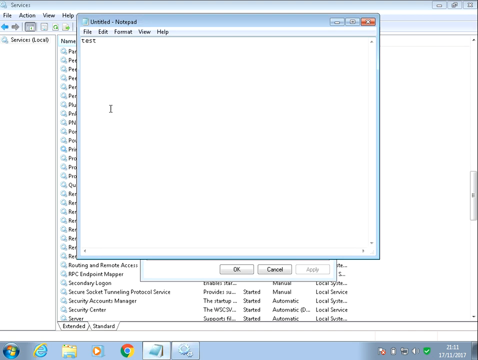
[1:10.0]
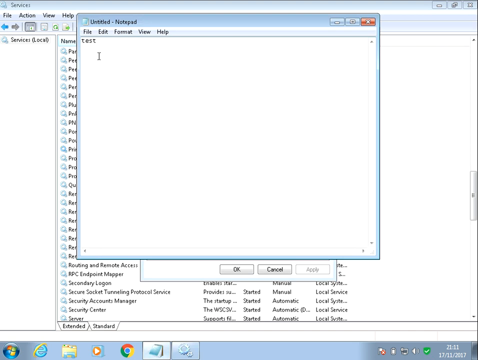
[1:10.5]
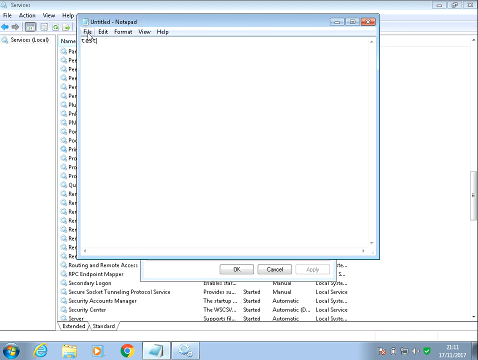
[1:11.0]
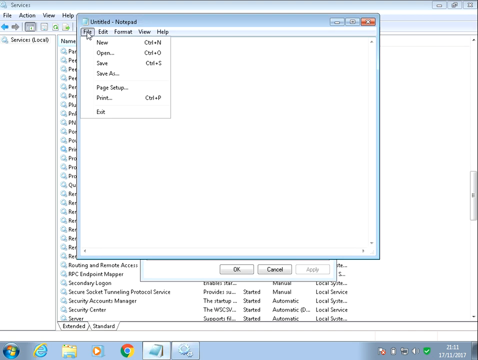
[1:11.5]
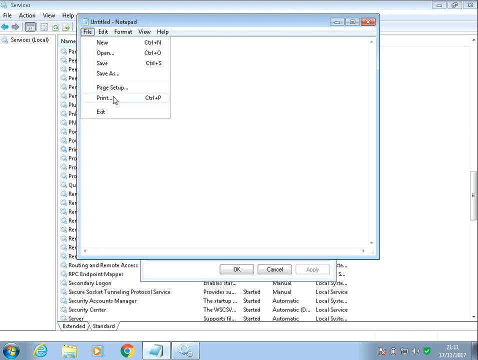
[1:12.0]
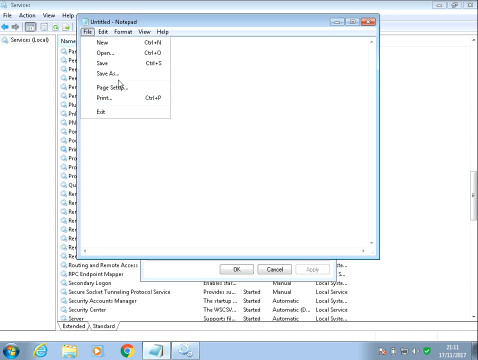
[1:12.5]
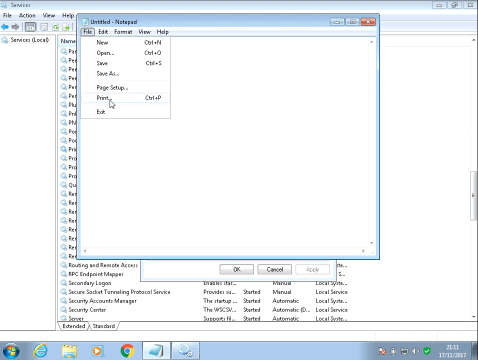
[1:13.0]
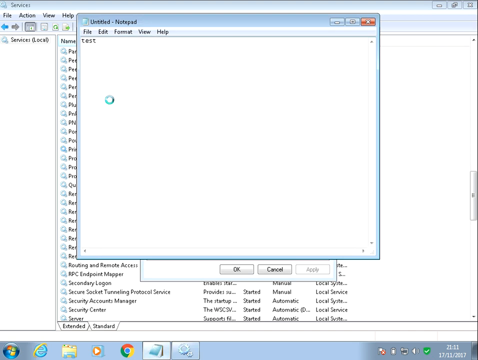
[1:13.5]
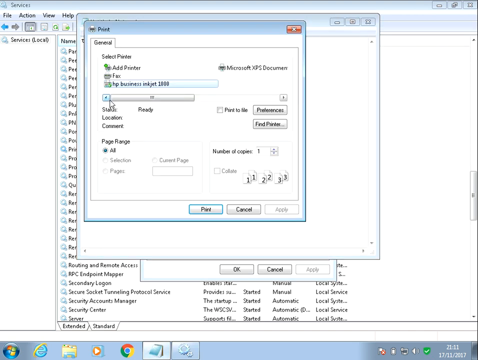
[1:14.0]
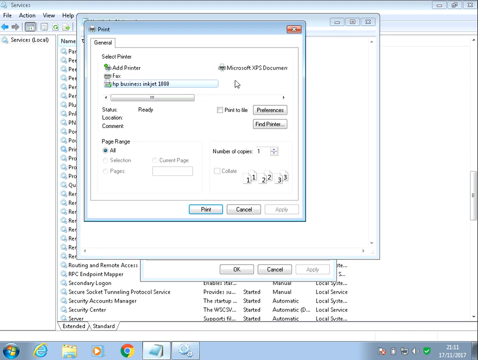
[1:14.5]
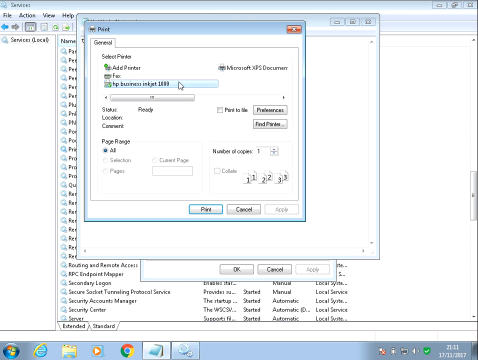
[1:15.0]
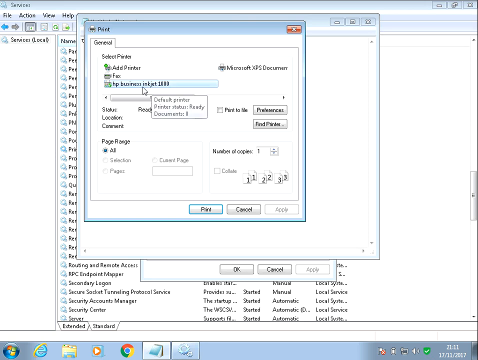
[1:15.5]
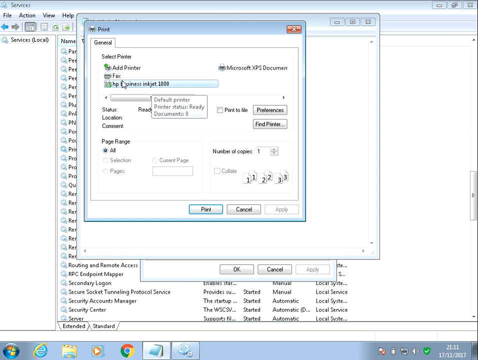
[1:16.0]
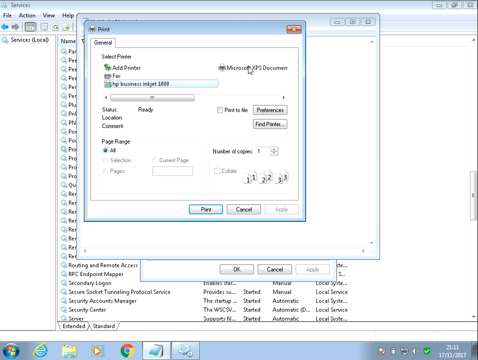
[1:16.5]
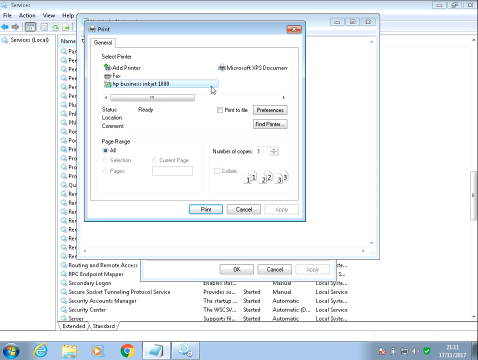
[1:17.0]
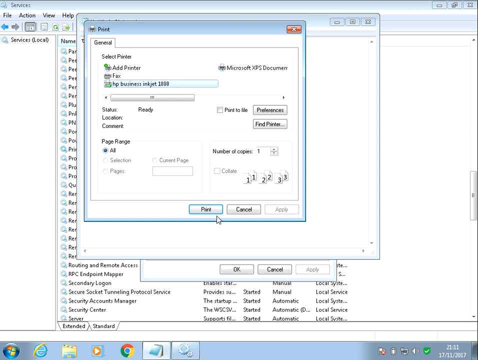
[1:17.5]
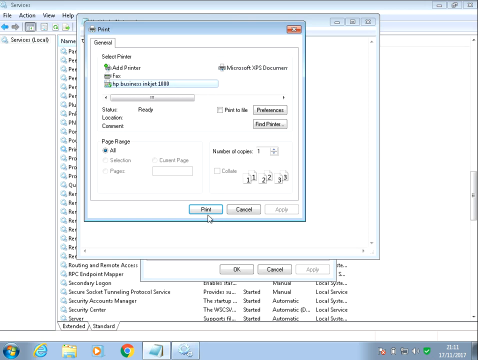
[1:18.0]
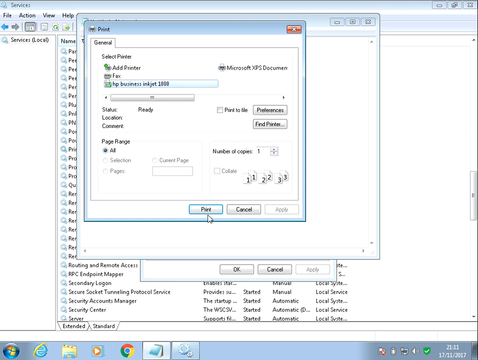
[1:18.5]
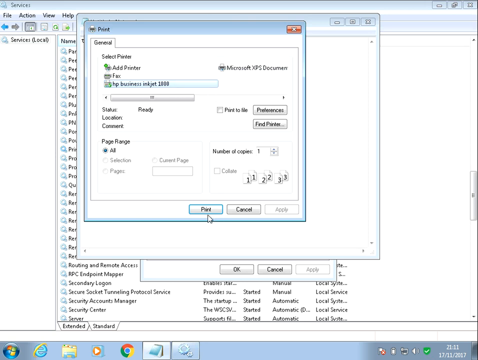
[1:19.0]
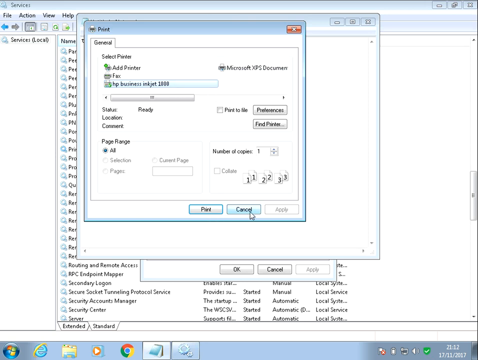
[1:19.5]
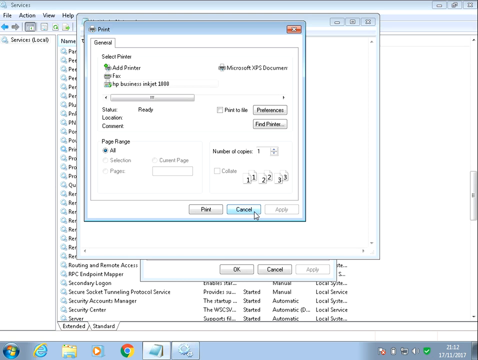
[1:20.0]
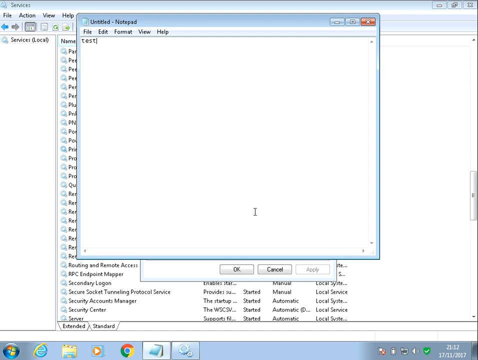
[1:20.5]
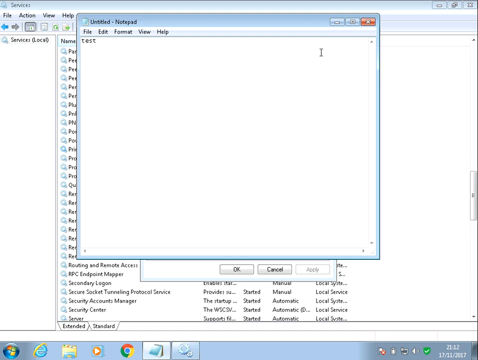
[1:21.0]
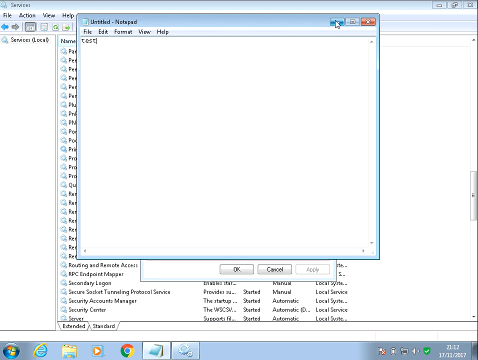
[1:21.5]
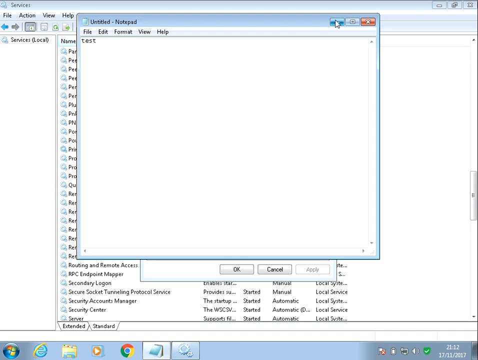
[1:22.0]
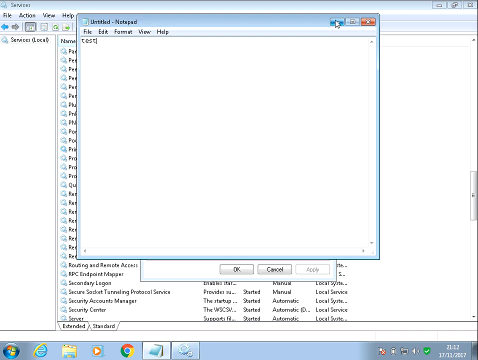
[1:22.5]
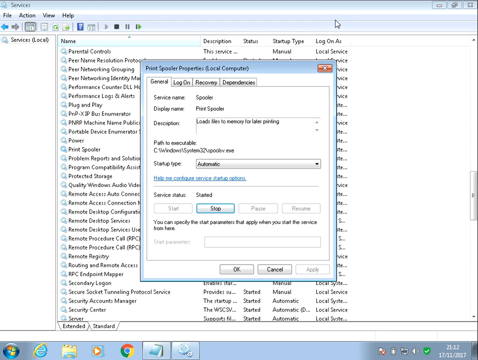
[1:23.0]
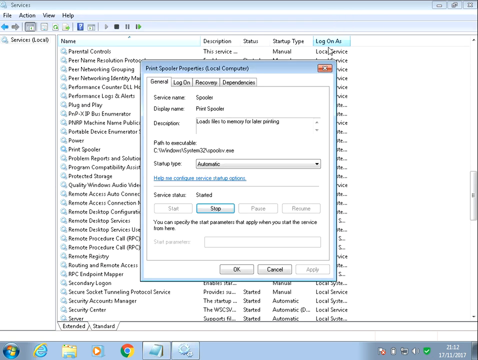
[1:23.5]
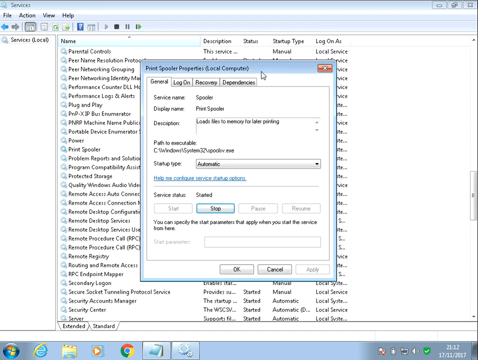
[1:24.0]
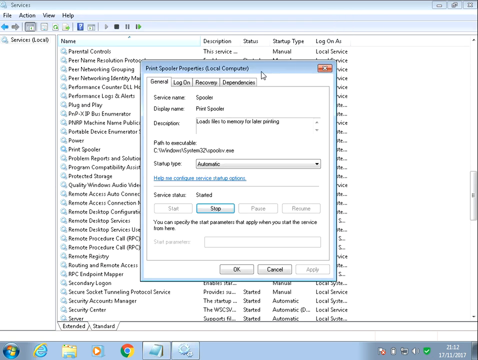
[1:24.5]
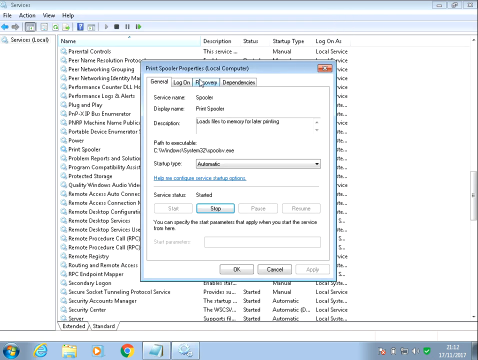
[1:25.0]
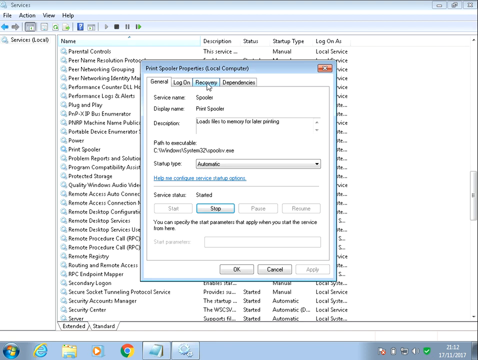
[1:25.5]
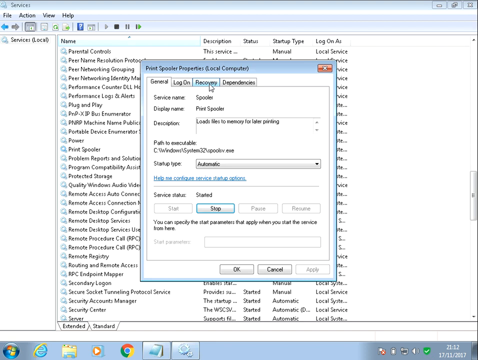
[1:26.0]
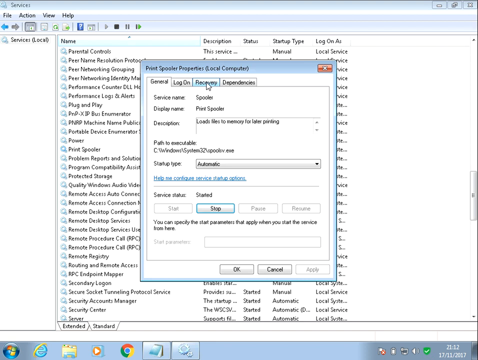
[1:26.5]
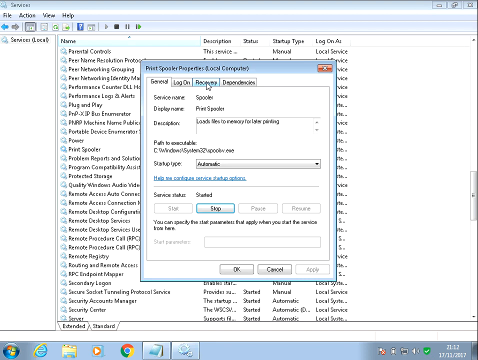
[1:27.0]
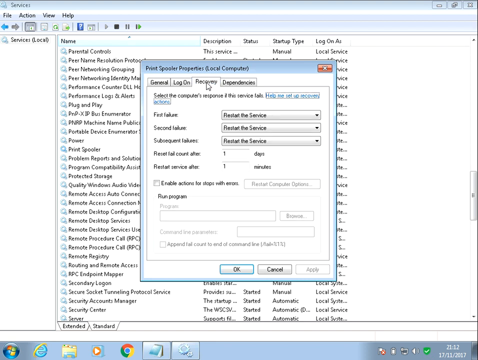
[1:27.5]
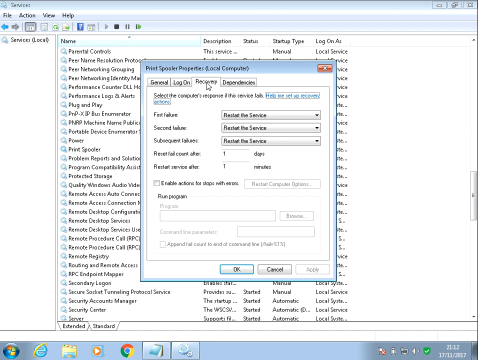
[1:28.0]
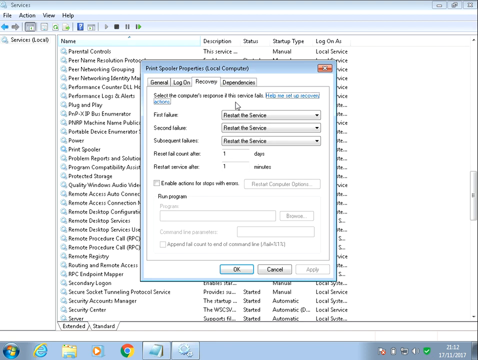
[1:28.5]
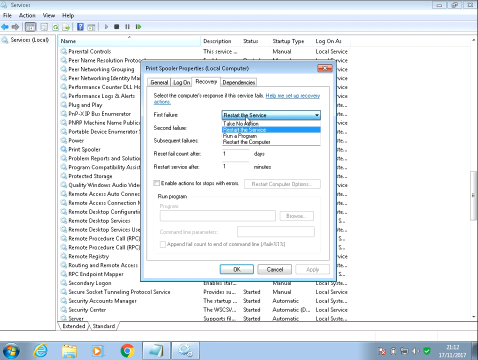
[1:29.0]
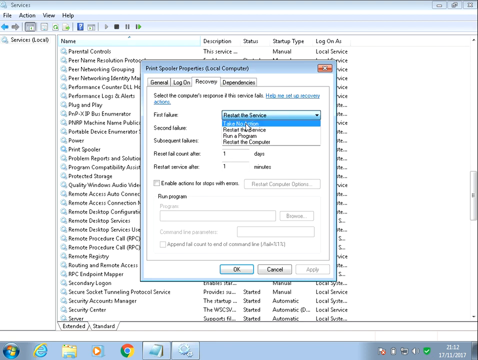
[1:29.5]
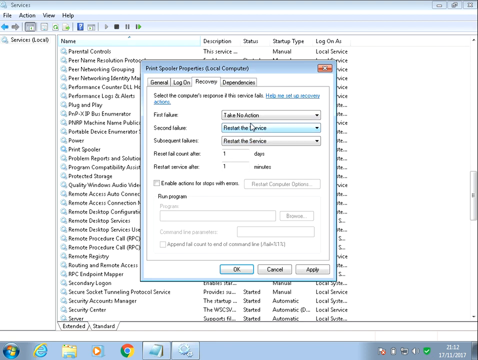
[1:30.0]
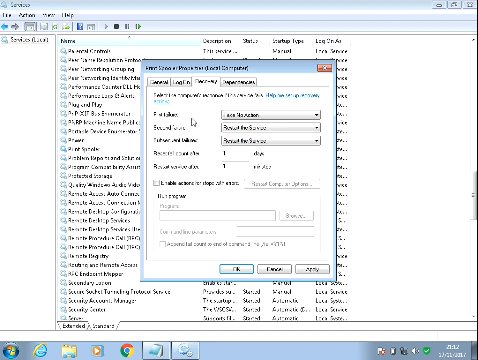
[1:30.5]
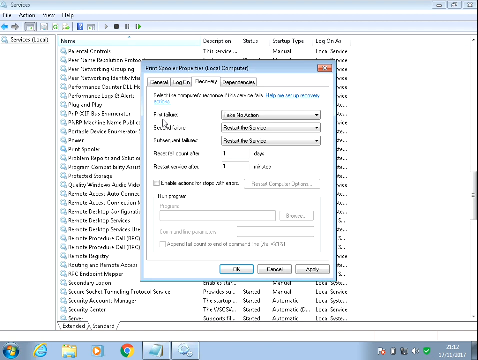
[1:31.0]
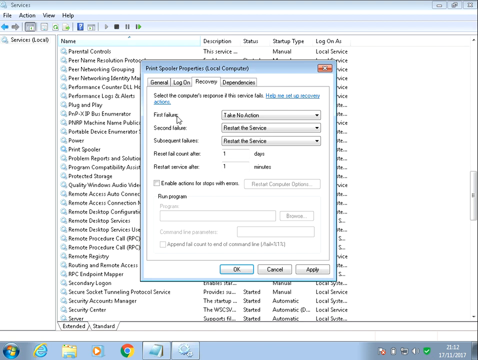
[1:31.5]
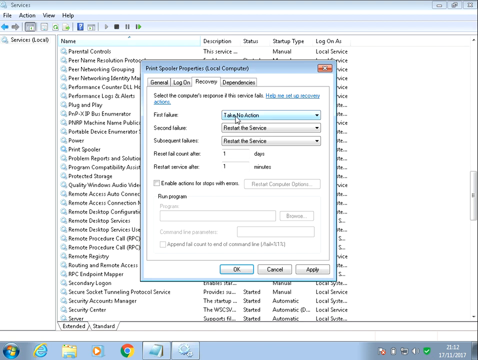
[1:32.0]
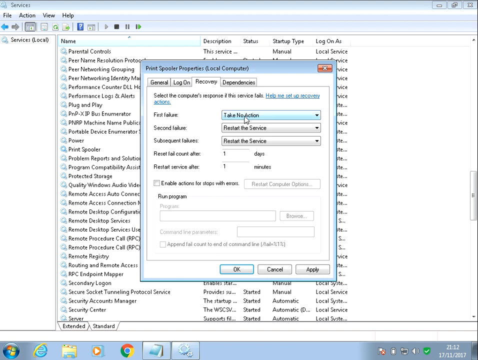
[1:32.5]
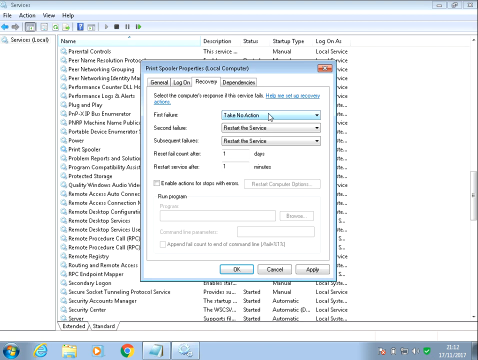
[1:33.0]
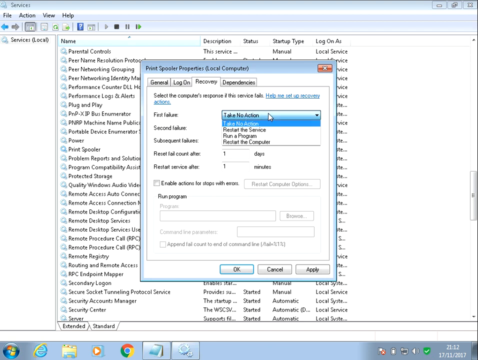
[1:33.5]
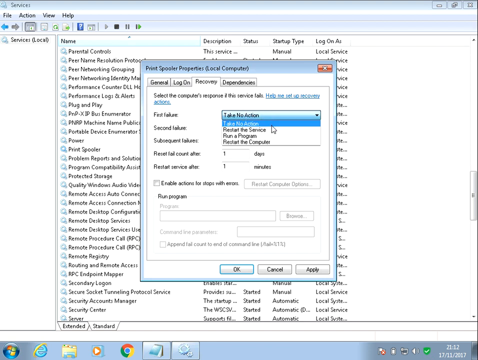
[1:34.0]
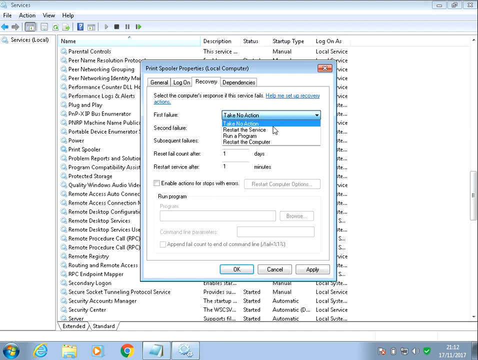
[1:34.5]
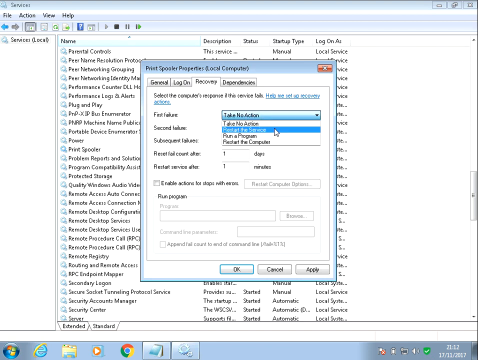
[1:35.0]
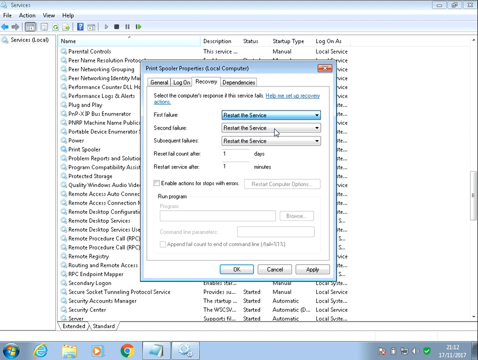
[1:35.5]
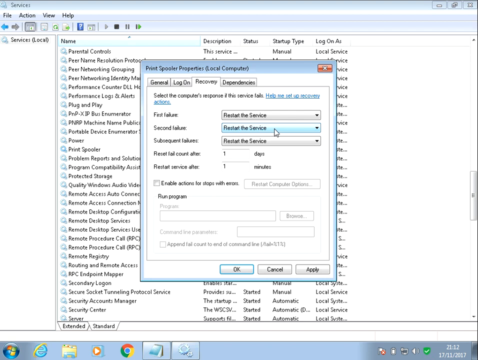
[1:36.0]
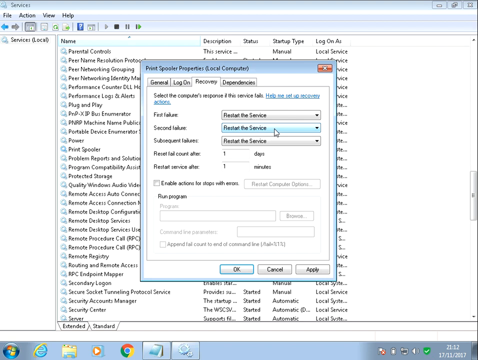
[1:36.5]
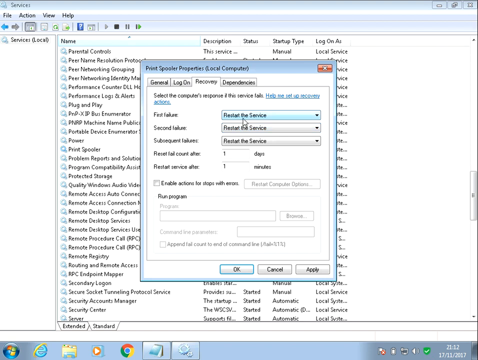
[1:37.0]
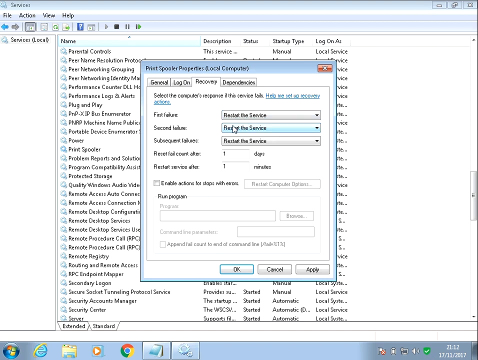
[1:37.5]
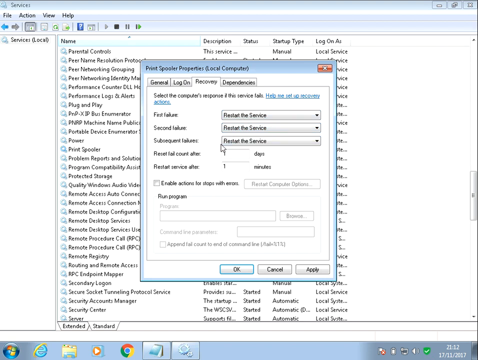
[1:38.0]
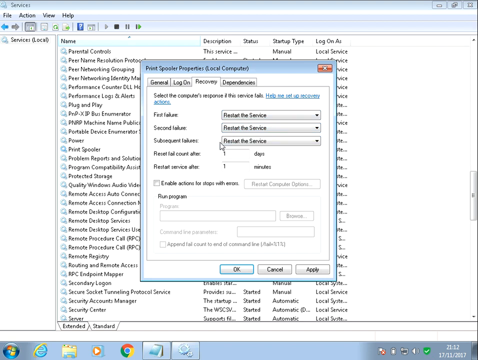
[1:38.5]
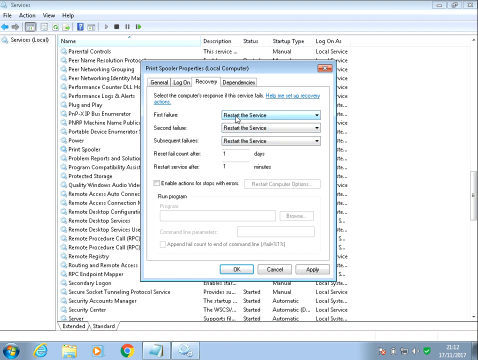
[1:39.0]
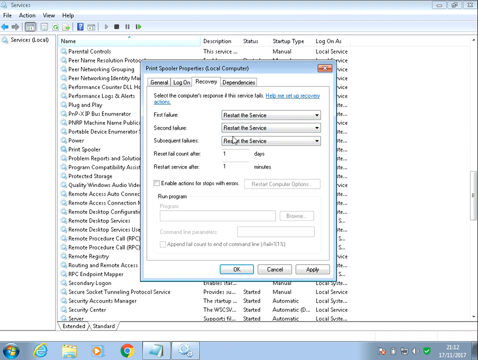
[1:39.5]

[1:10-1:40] The frame is just a little wider than it is tall. The Services window is open within Windows and fills the background of the screen, with Notepad overlapping on top of it in the center. The user has selected the File menu, which has dropped down its options, and goes to Print. He checks and arrows over the printer name, HP Business Inkjet 1000, then goes down and clicks Cancel. Underneath is an open Notepad, untitled as it says at the top, containing just the word "Test". He minimizes it, revealing another window that says "Print Spooler Properties" in the upper left with "Local Computer" in parentheses. Below are four tabs across: General, Logon, Recovery and Dependencies, with General selected in the upper left. Below that, Service Name is "Spooler" and Display Name is "Print Spooler".